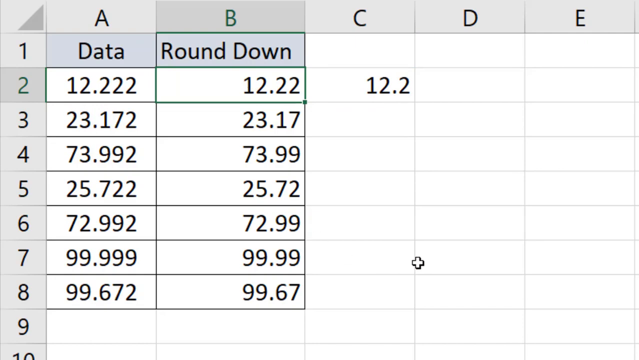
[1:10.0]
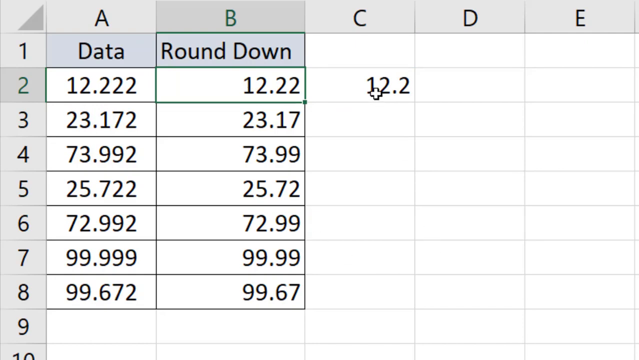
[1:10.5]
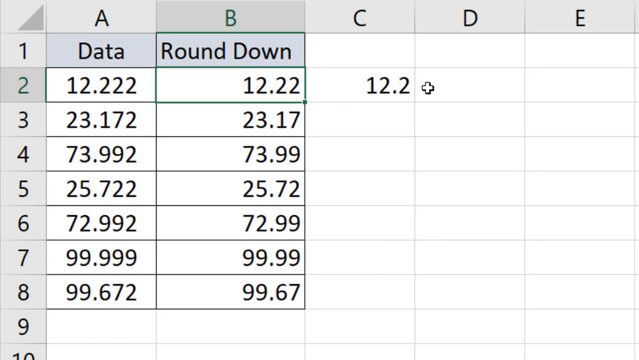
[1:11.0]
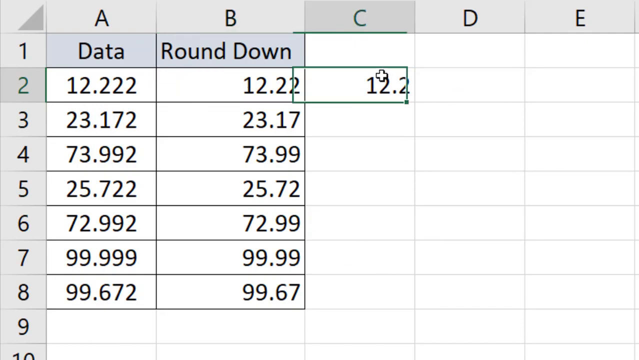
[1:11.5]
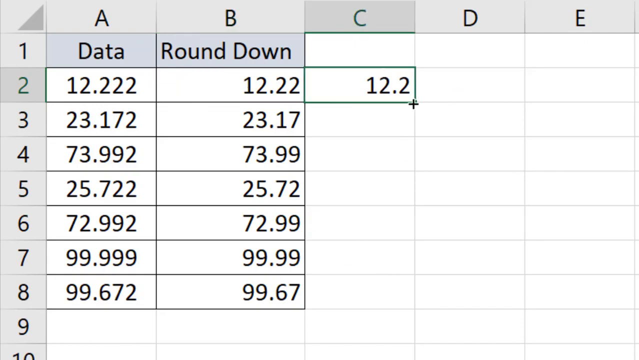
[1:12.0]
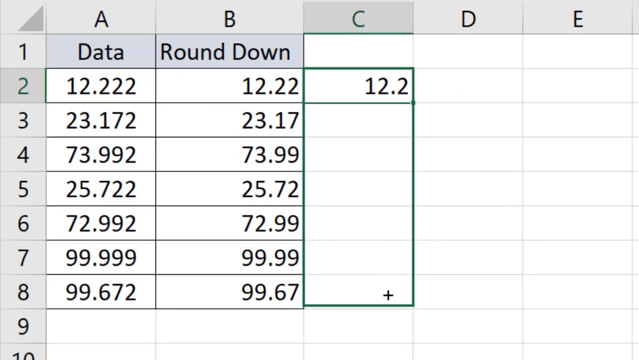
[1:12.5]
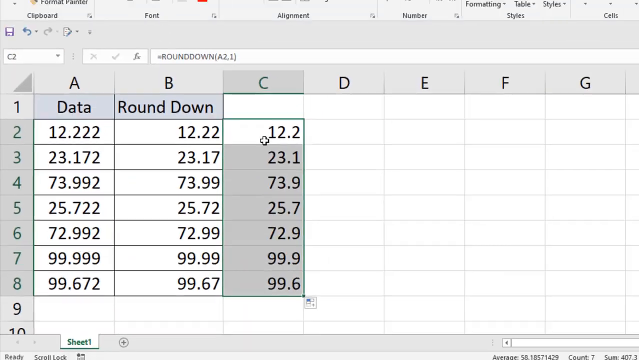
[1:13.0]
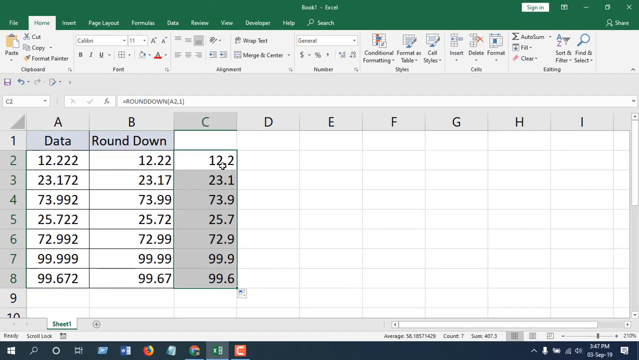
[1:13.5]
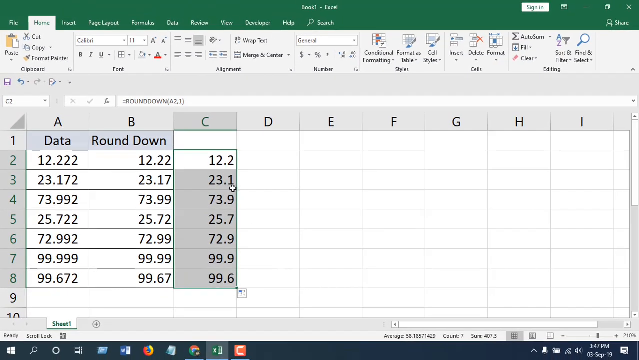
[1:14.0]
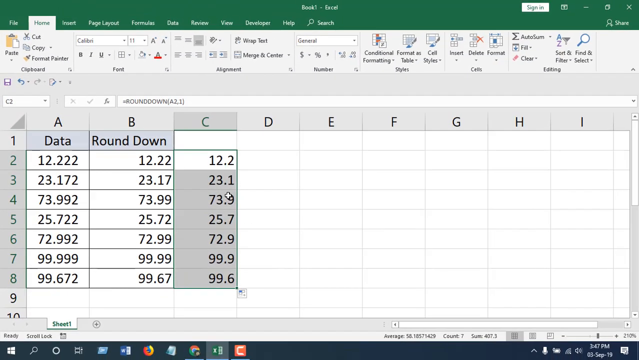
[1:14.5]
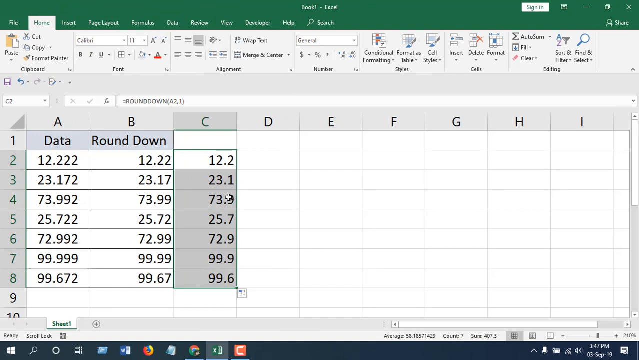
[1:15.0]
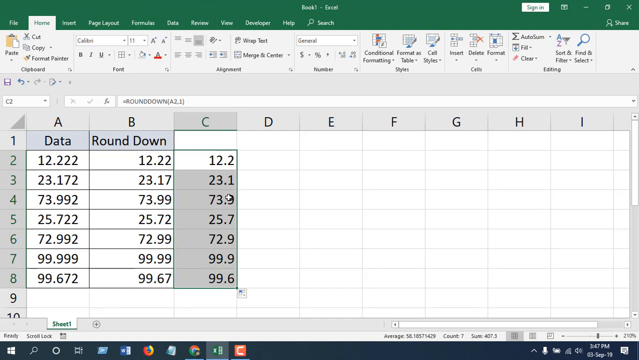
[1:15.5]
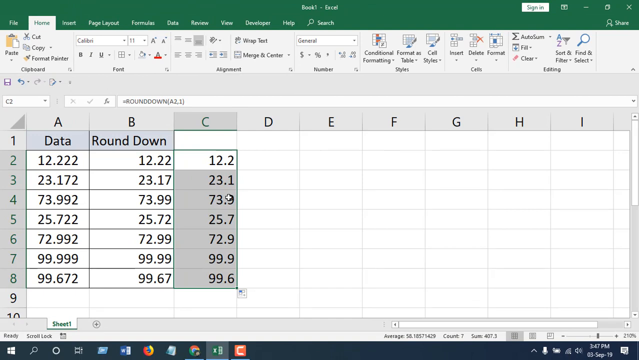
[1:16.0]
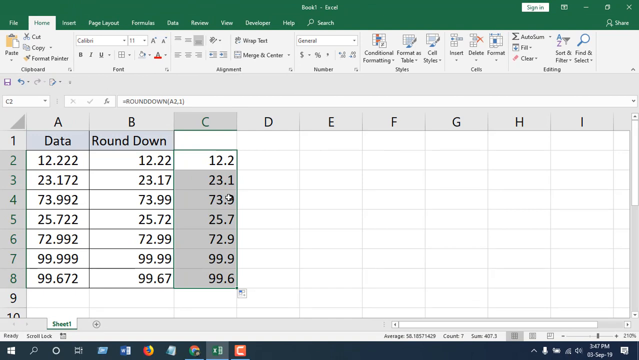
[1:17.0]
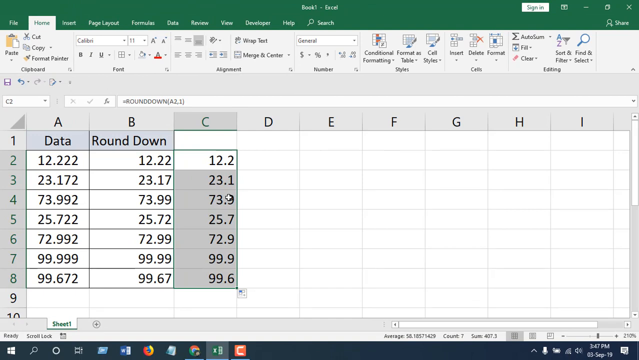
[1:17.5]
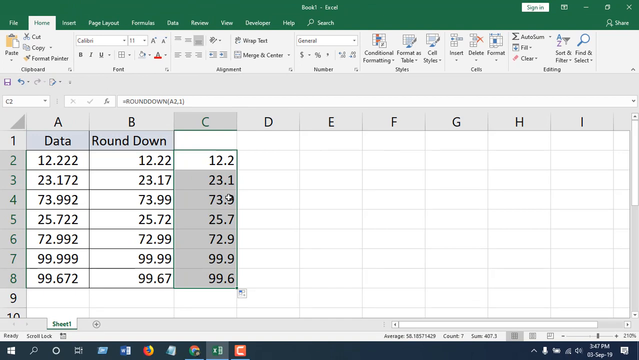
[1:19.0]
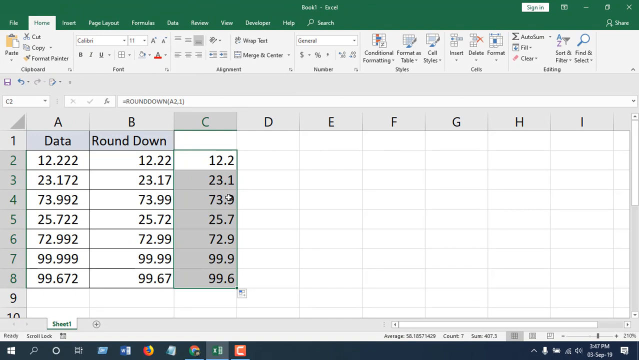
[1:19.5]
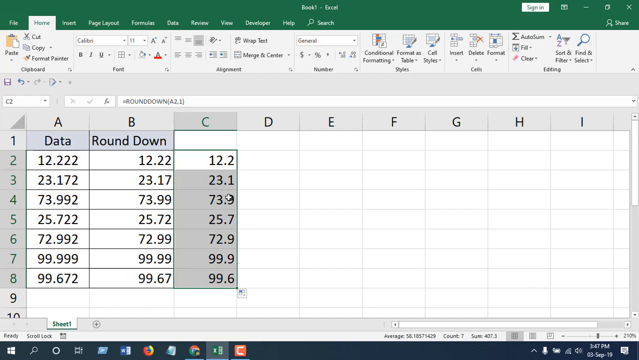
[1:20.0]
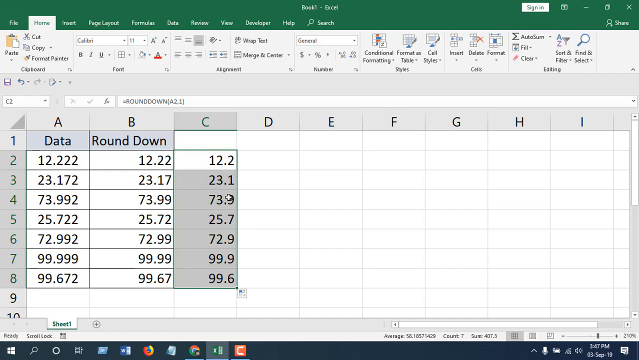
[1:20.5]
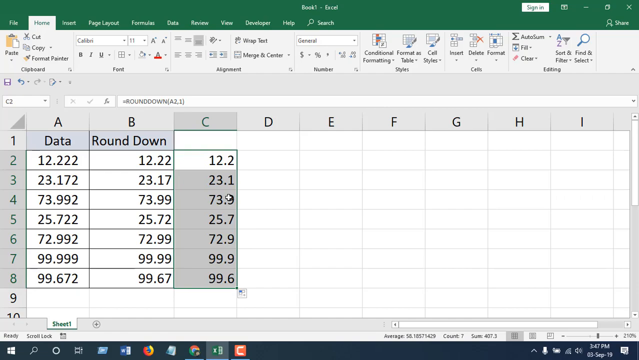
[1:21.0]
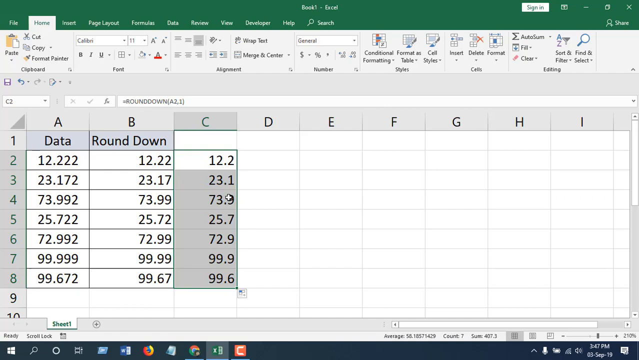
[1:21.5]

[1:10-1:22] The computer screen shows data and round down, with letters A, B, C, D, E, F, G, H and I across the top and numbers 1 to 10 down the side; row 9 is blank. Row 2, marked A2, shows 12,222; row 3 shows 23,172; row 4 shows 73,992; row 5 shows 25,722; and further rows show 72,992 and 99,999. The mouse is zooming from A to E. No humans, kids, animals, trees or buildings appear, only numbers and writing from A to E.